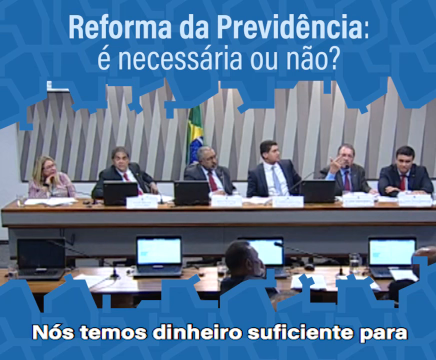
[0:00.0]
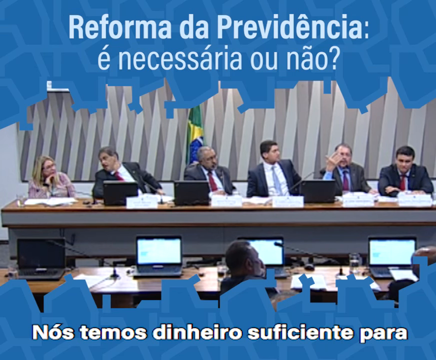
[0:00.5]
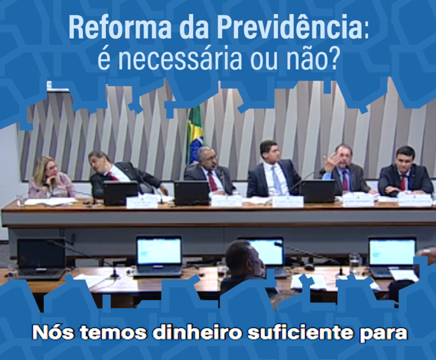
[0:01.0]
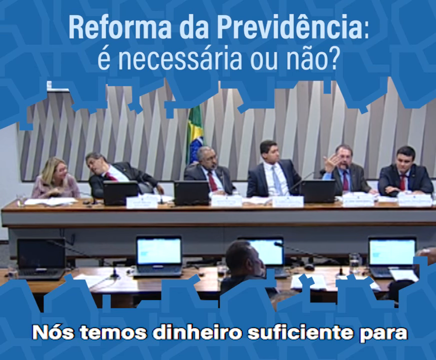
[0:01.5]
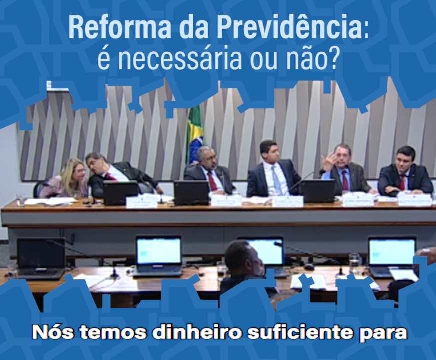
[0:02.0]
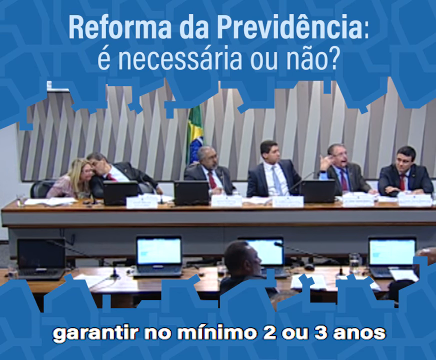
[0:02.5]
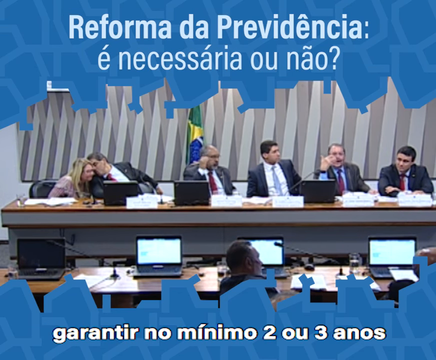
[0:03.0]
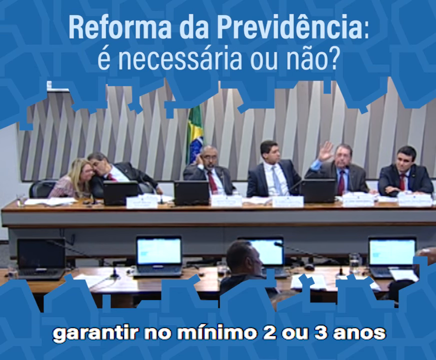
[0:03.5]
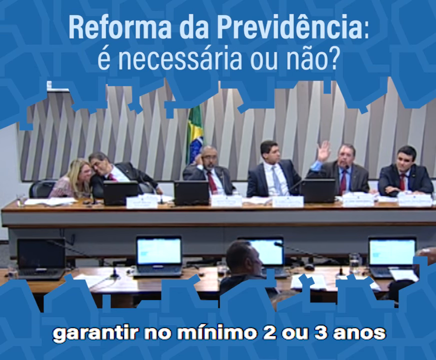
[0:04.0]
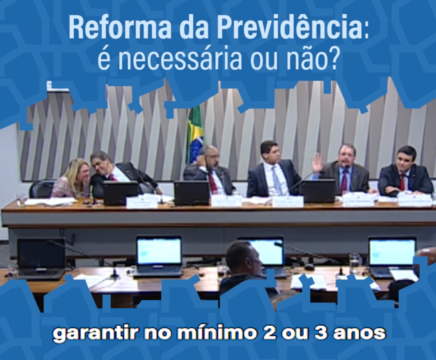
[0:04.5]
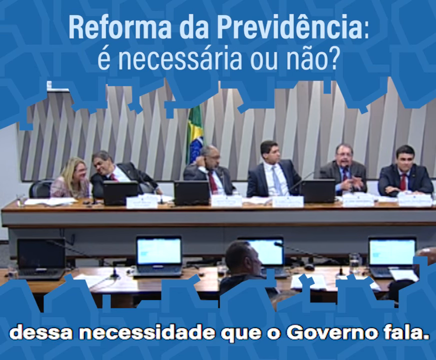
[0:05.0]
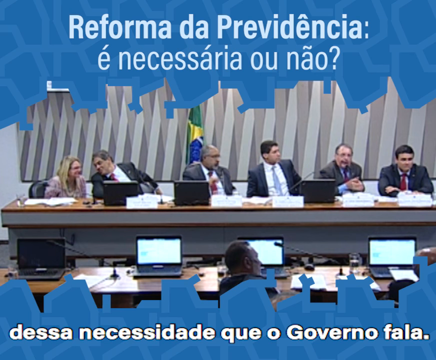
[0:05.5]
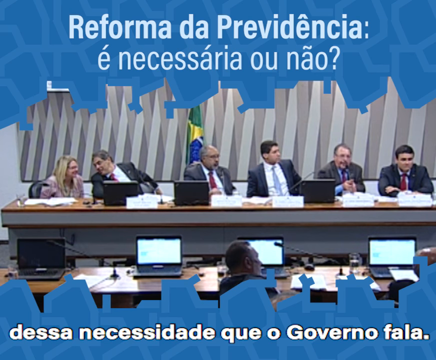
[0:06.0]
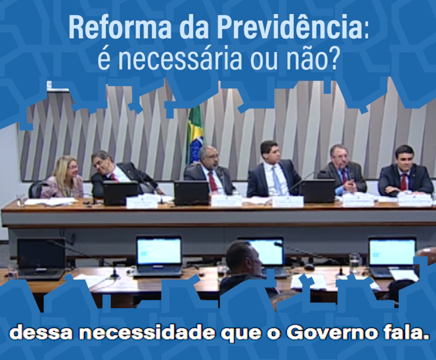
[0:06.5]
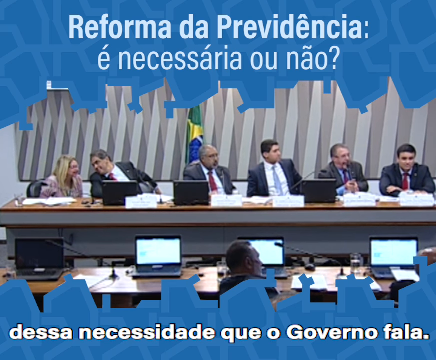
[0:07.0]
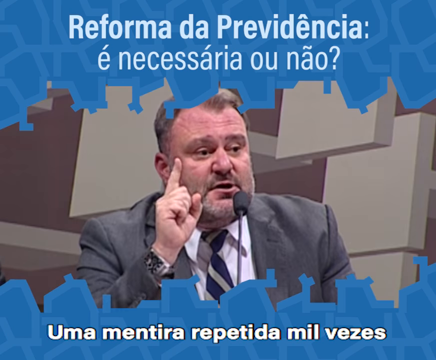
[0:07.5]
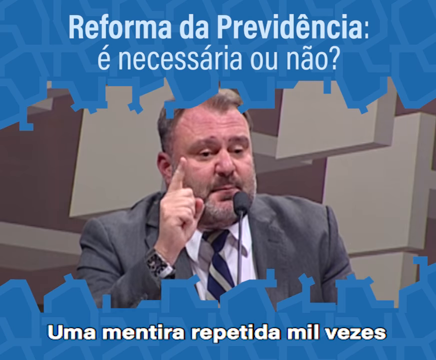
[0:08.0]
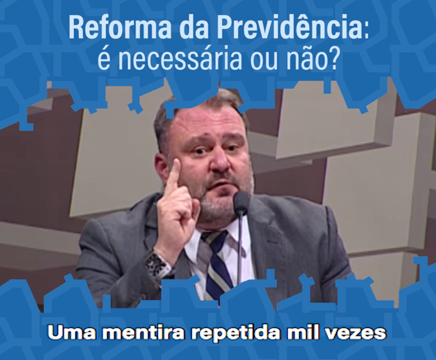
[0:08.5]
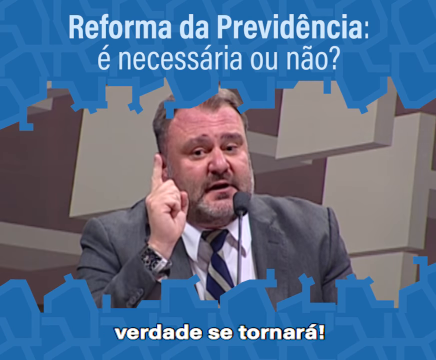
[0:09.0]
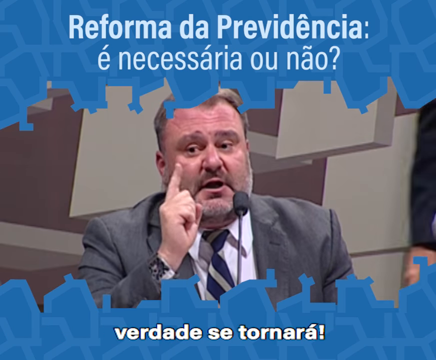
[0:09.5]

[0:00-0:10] Indoors, a group of people, maybe about nine, are seated, and all of those in front have open laptop computers and piles of paperwork. They talk to each other and to the camera crew. A flag that looks like a Brazilian flag is visible behind them. The setting quickly changes to a seated man who is white, with short light blonde hair, wearing a light grey suit and a blue-and-white striped tie; he talks into a microphone and points with a finger. The scene then returns to the indoor setting, where about a dozen people are seated, predominantly male, with only one woman visible. The location is apparently Brazil, judging by the flag and the language. Words in what appears to be Spanish run across the top of the screen, reading "Reforma da Previdência e Necessaria", suggesting possibly a debate about presidential elections.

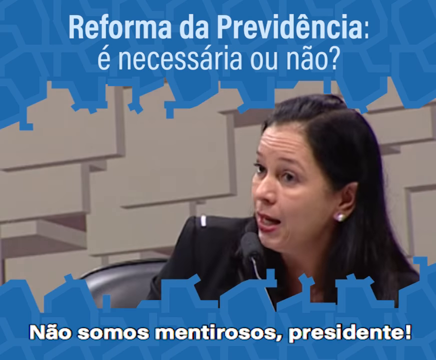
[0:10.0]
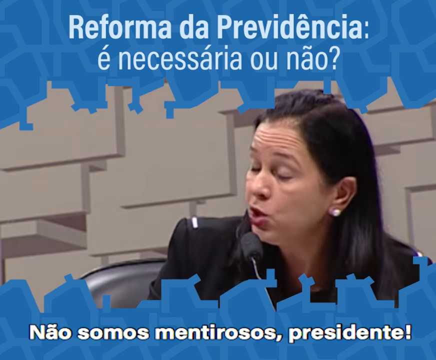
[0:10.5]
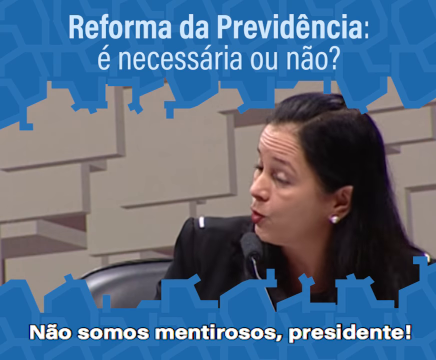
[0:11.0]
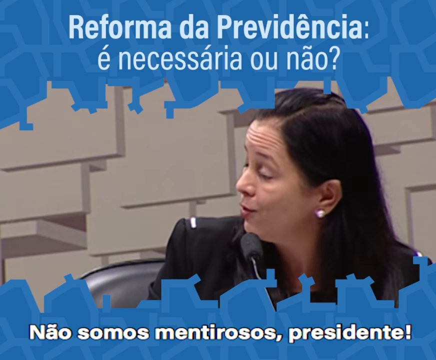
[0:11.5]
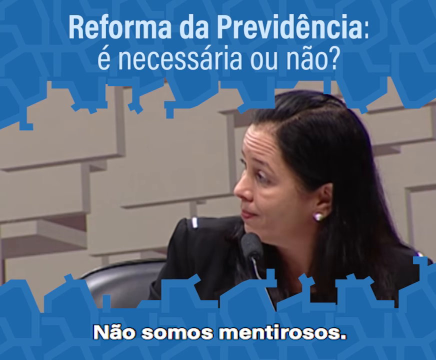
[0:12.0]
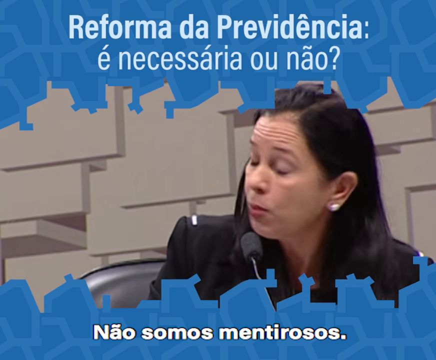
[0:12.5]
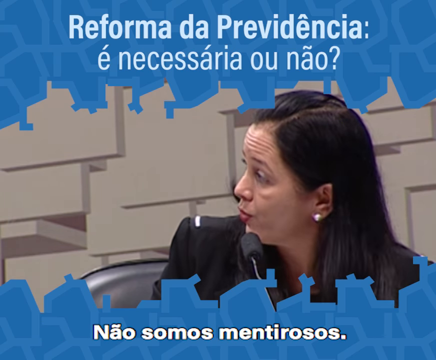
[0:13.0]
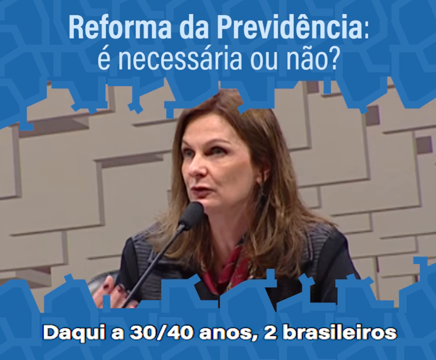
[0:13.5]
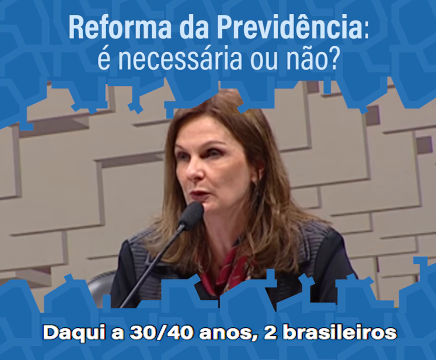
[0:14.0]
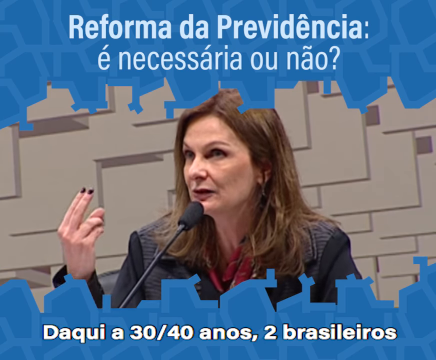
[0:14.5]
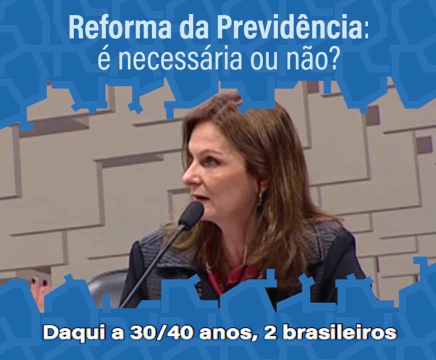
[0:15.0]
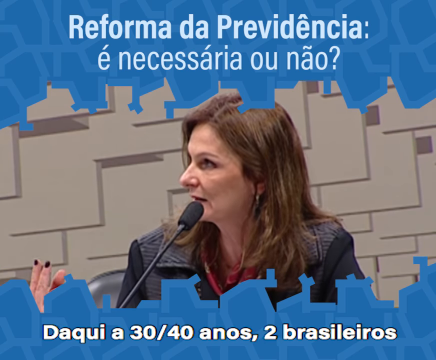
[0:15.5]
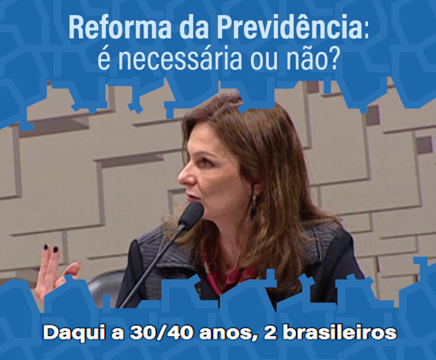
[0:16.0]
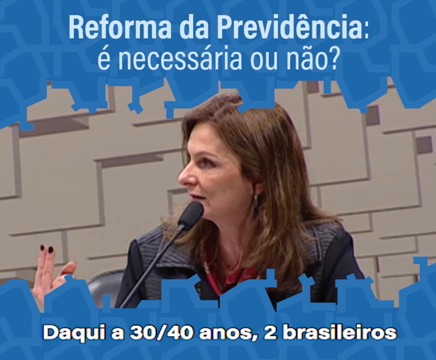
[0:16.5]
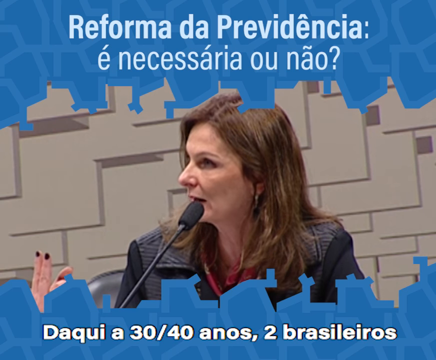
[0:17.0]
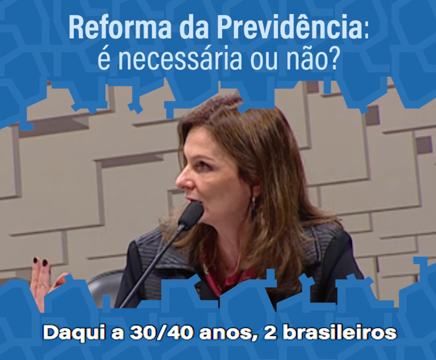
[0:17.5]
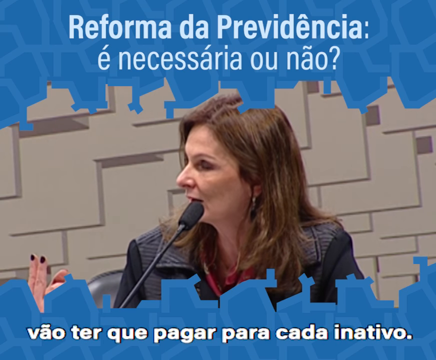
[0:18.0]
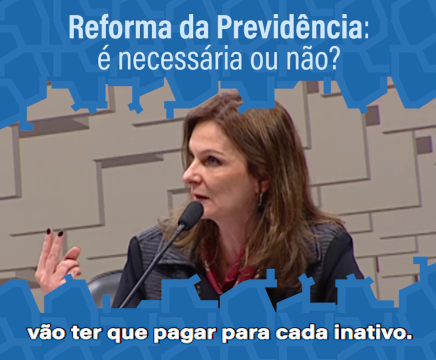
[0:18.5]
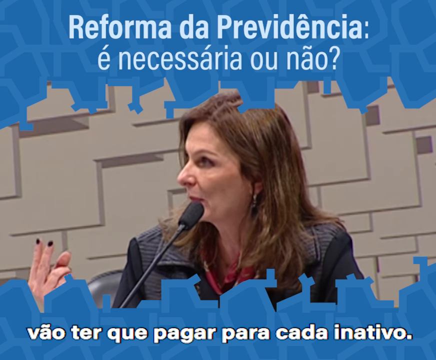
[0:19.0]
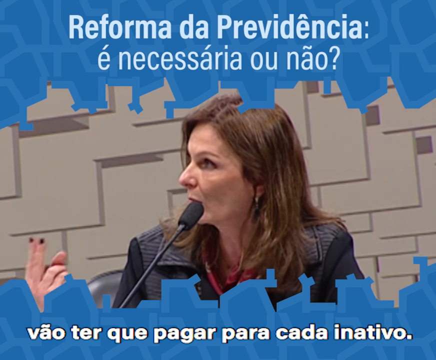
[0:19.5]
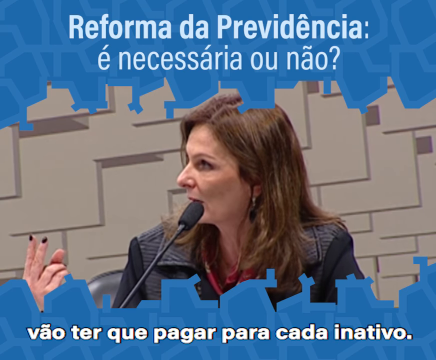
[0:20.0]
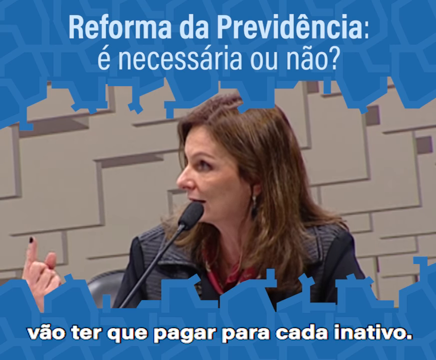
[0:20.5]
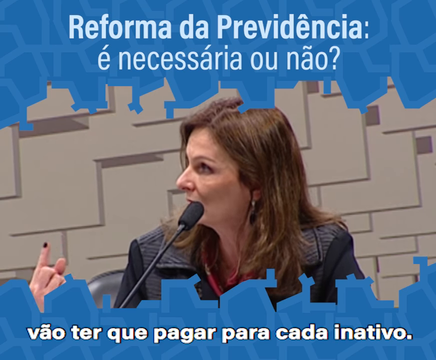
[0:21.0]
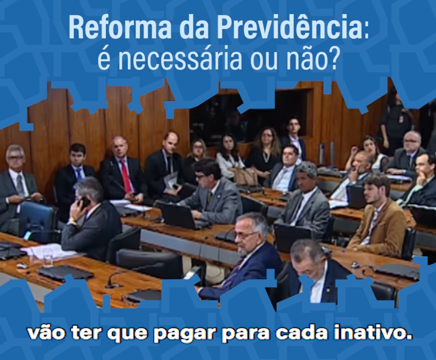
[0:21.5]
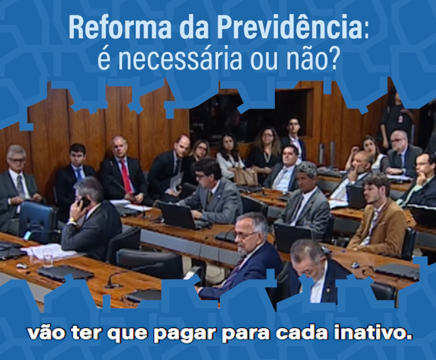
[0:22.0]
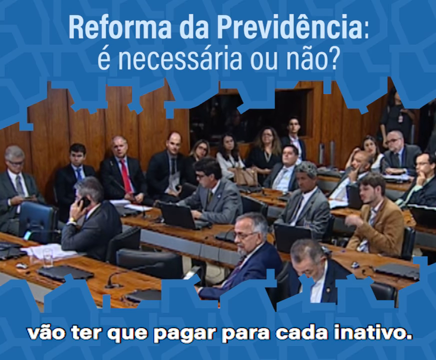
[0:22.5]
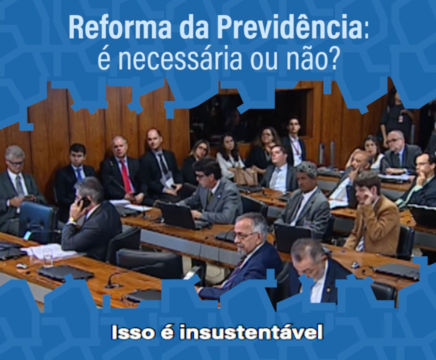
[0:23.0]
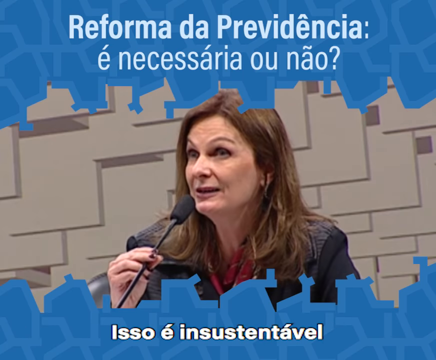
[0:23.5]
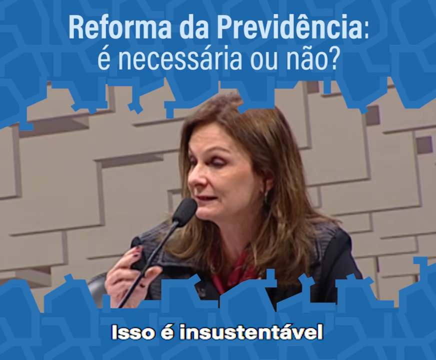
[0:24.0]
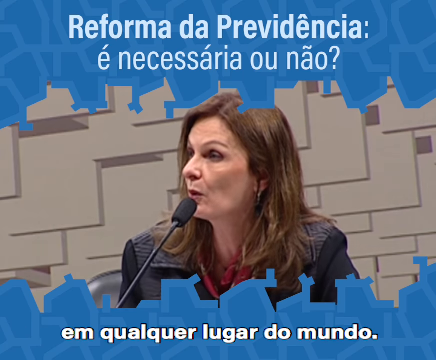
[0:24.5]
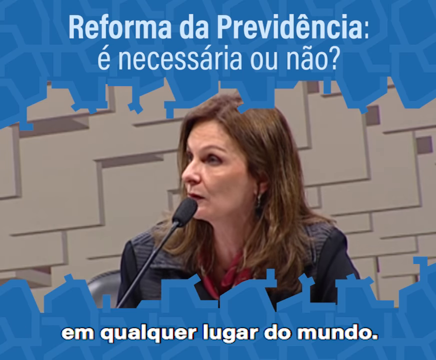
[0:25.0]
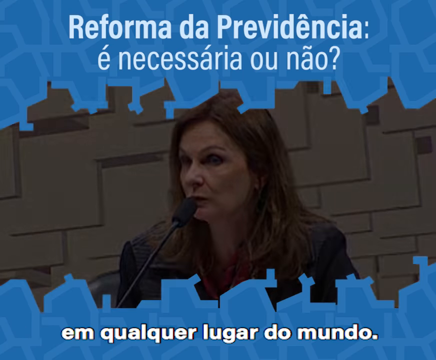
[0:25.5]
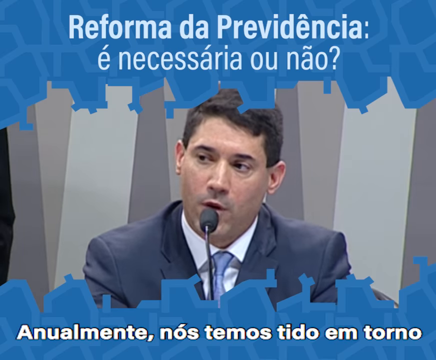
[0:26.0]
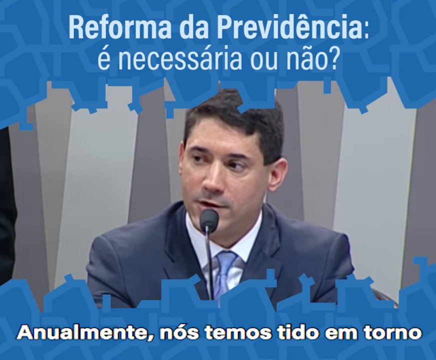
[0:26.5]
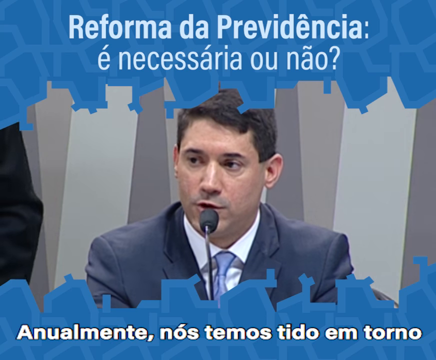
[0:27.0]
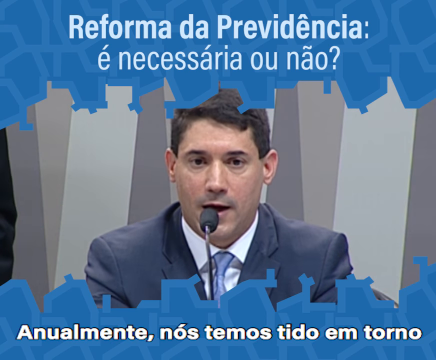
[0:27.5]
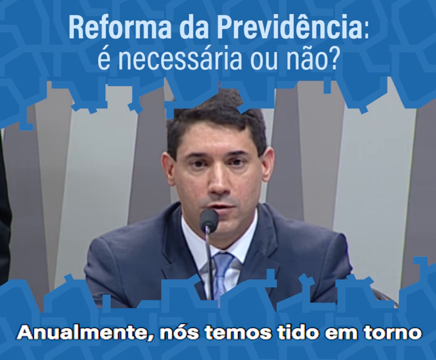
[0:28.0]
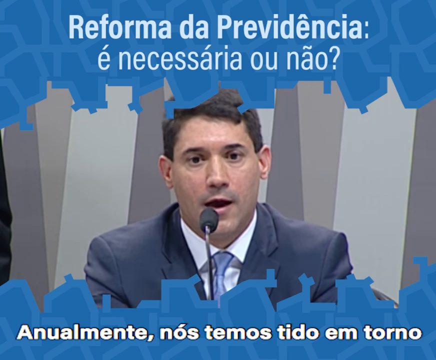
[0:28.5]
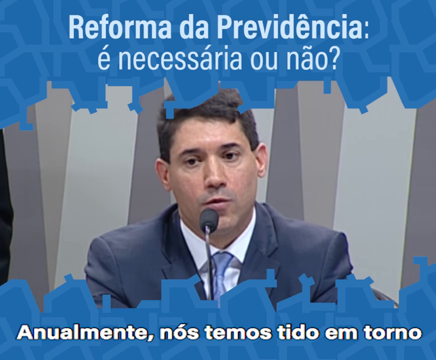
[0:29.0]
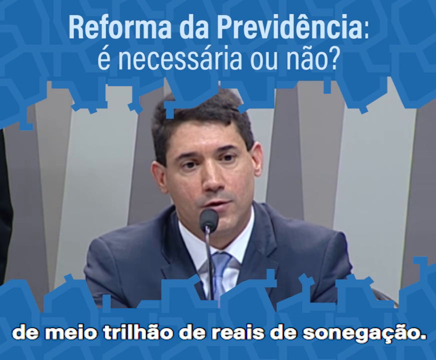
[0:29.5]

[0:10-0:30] A middle-aged woman, about 48 to 52 years old, with black hair just past her shoulders and white pearl stud earrings, debates in what seems to be a parliamentary setting. A microphone is in front of her, and she talks very angrily, repeatedly looking at the opponent over her left shoulder. The scene changes within the same setting: the microphone is now in front of another woman, who is white, about 58 to 62 years old, with light blonde to brown hair. She talks into the microphone, neither calm nor angry, using her hand to make her point, and her nails are painted with black nail polish. The scene then changes to a different angle of the same setting. The room has wooden tables in rows, with men sitting in the rows of tables and chairs. On the tables some laptops are open and some are shut, and every table has a microphone in front of it. Three women can be spotted among a group of about 20 men; they are sitting at the back in the far left corner, listening attentively.